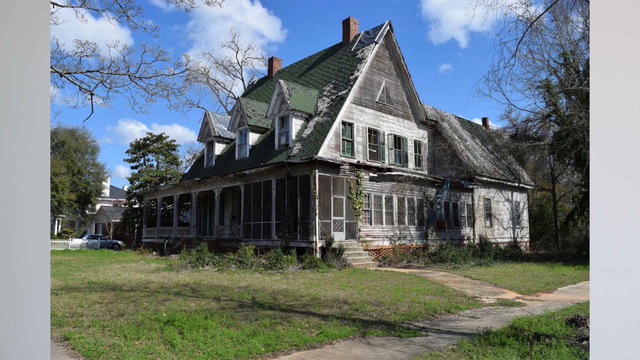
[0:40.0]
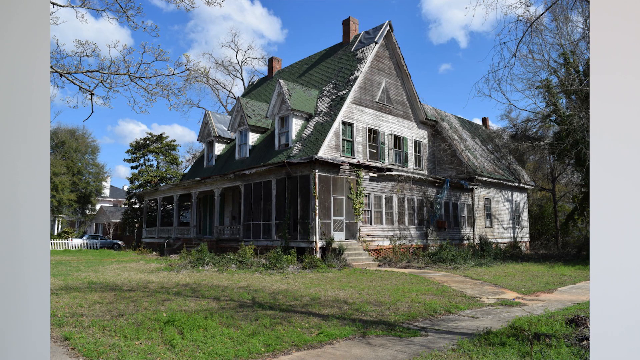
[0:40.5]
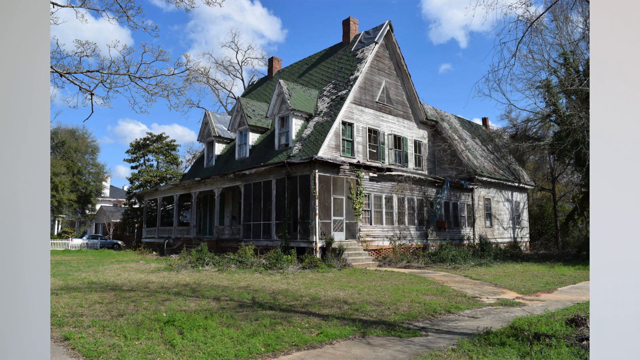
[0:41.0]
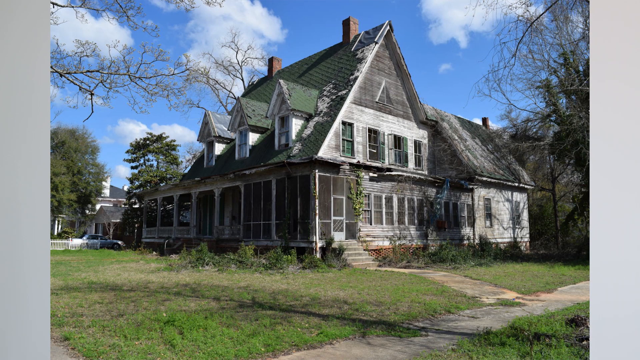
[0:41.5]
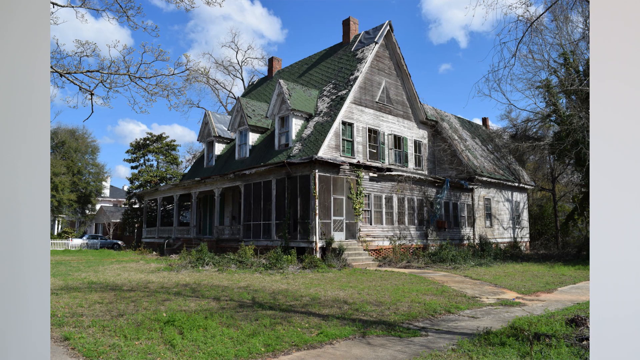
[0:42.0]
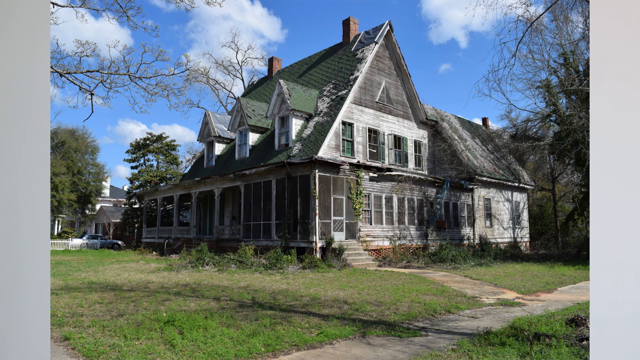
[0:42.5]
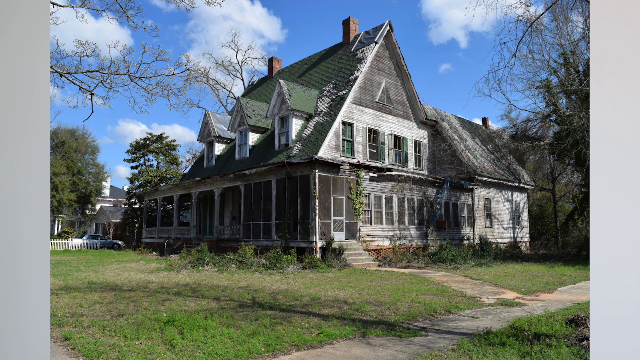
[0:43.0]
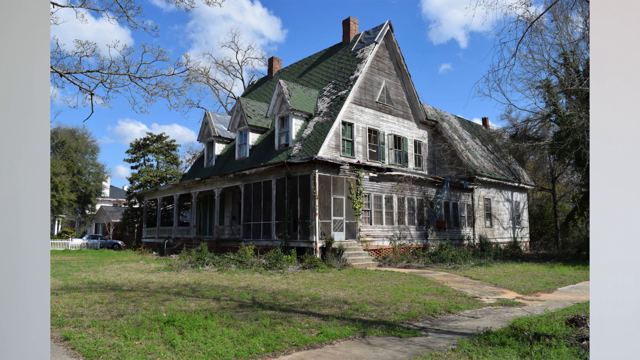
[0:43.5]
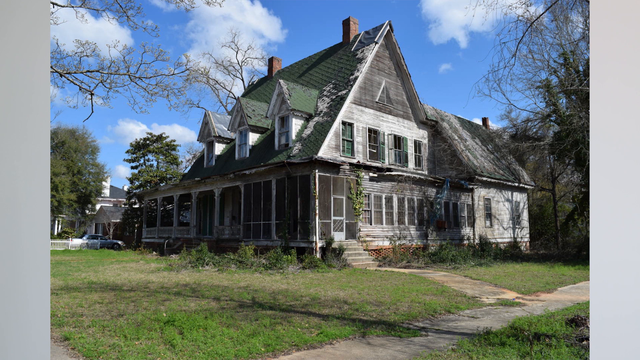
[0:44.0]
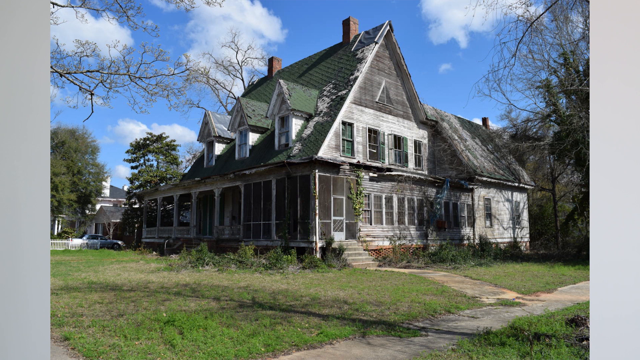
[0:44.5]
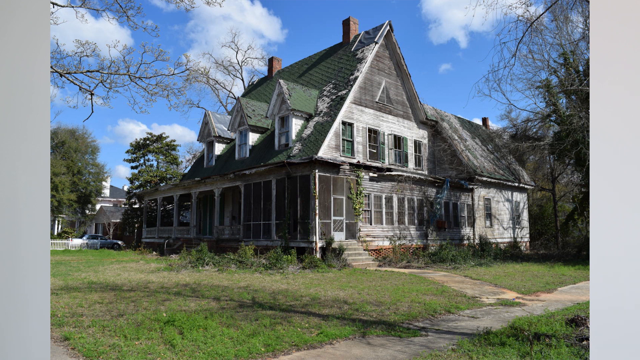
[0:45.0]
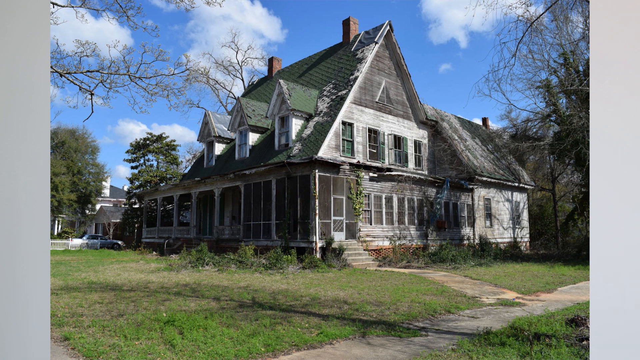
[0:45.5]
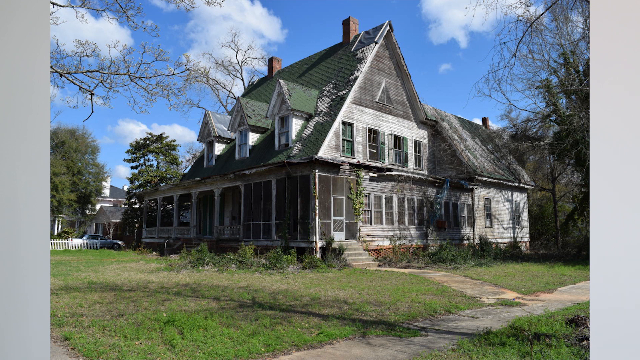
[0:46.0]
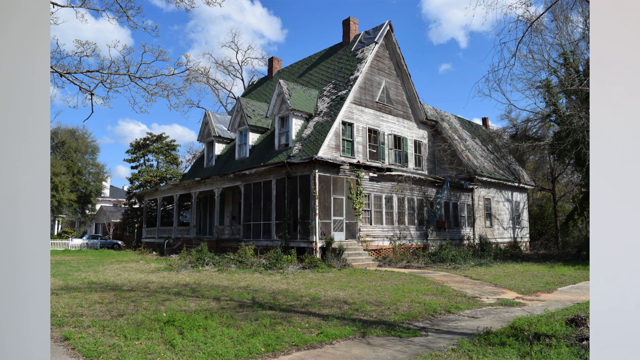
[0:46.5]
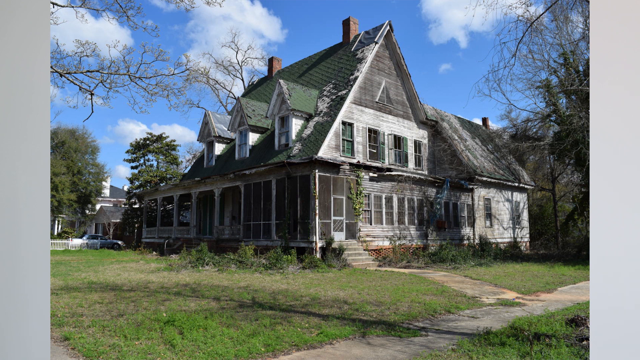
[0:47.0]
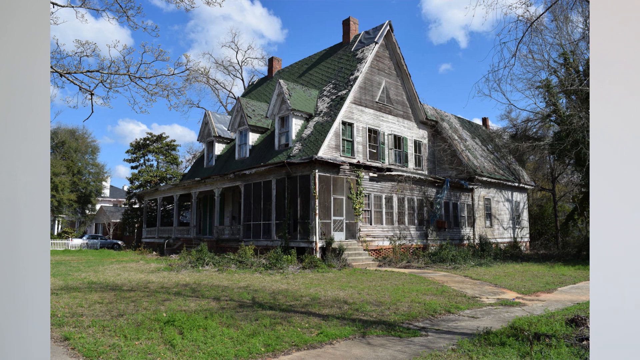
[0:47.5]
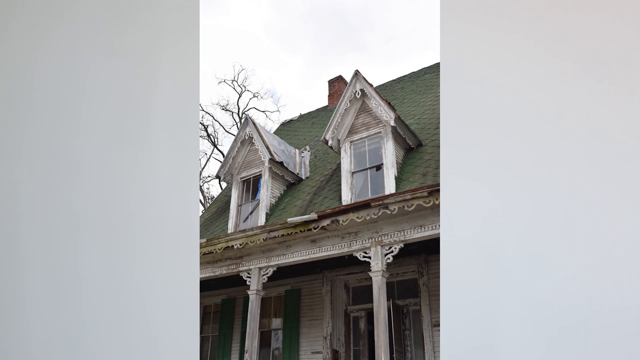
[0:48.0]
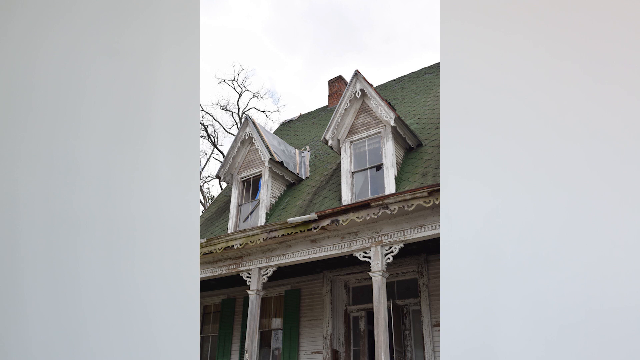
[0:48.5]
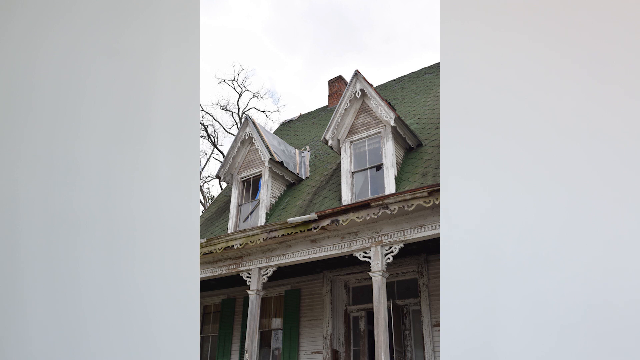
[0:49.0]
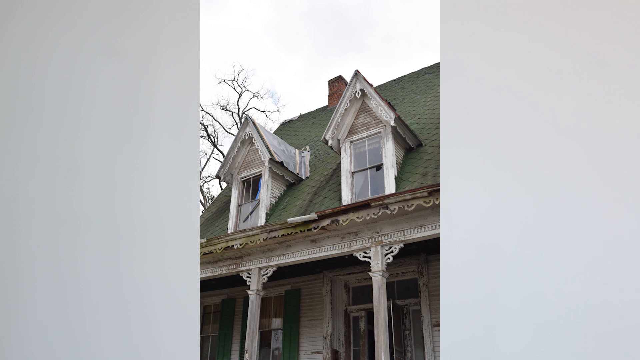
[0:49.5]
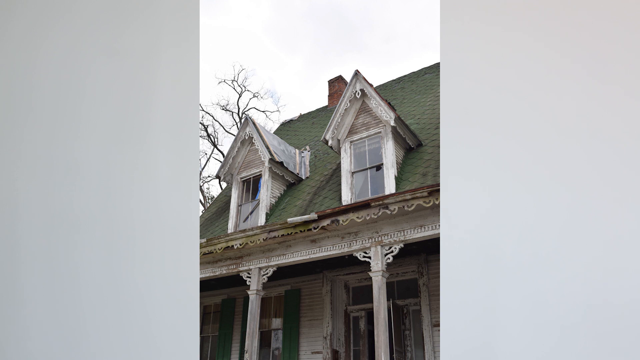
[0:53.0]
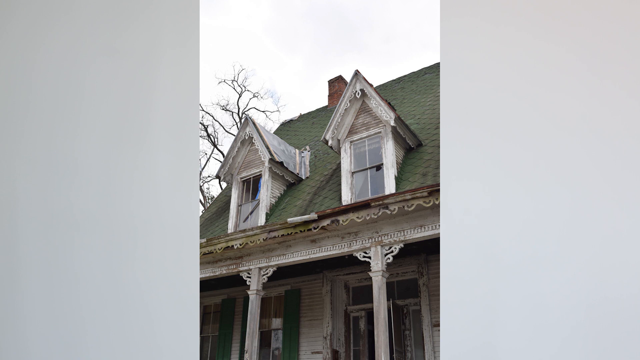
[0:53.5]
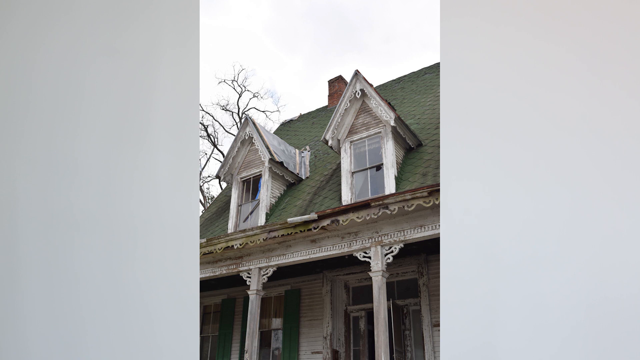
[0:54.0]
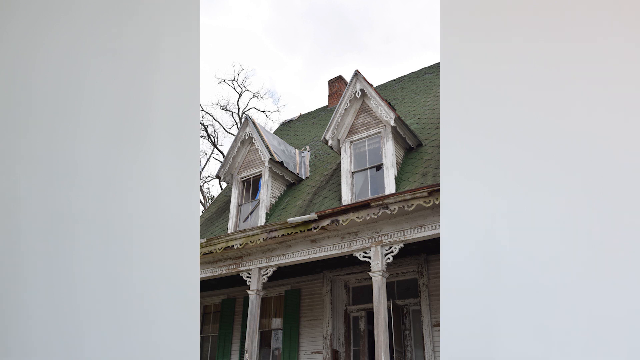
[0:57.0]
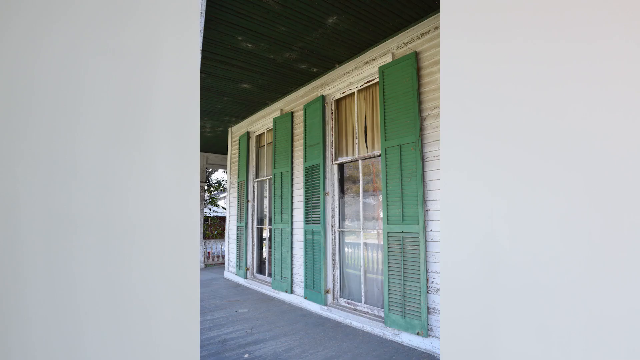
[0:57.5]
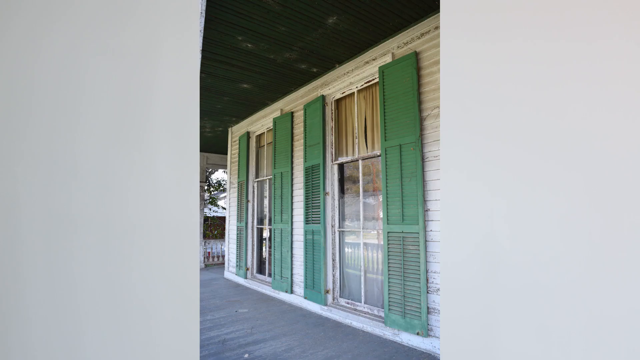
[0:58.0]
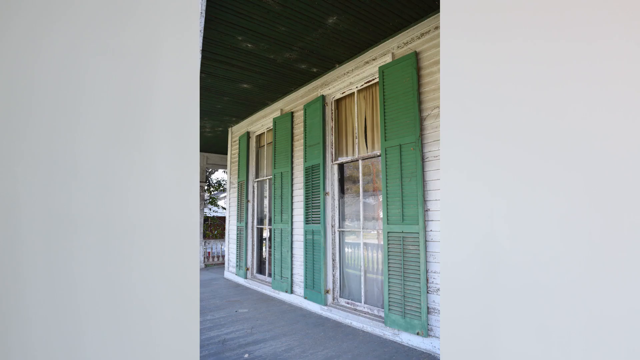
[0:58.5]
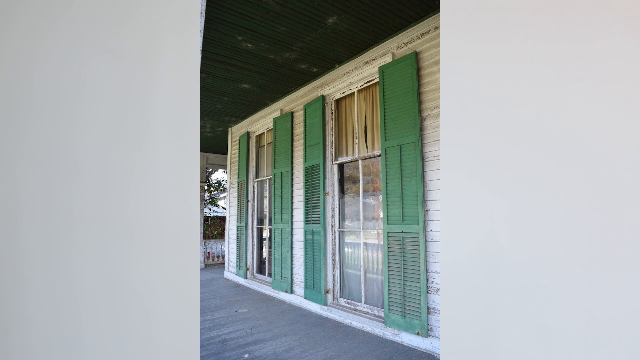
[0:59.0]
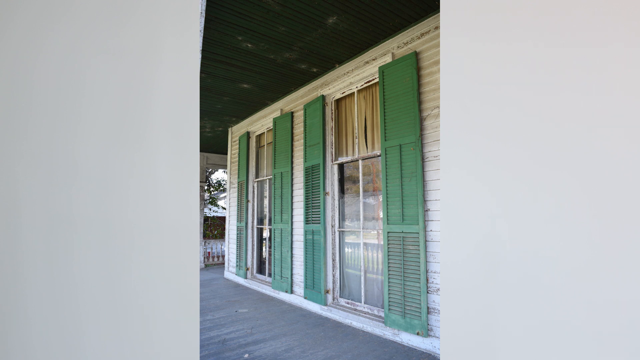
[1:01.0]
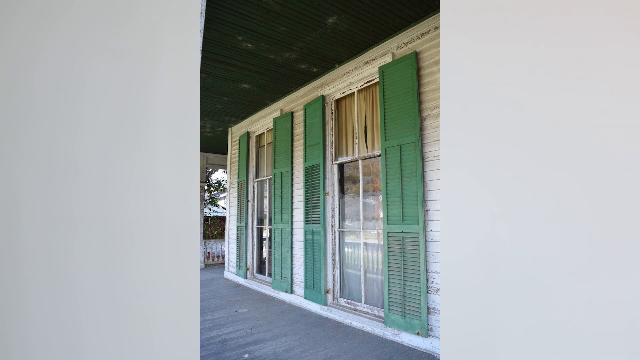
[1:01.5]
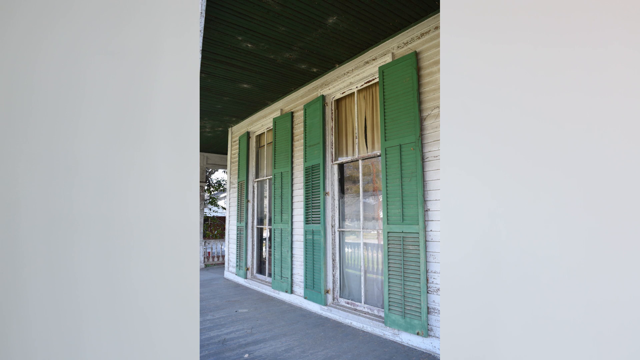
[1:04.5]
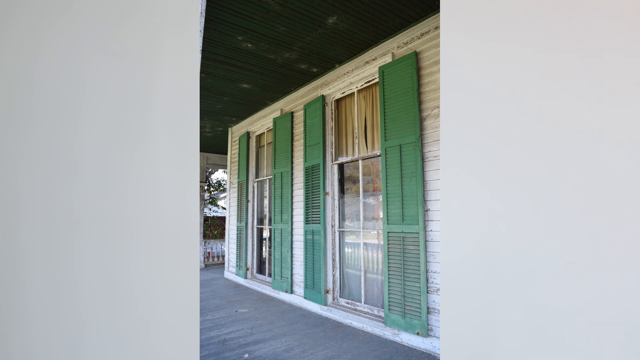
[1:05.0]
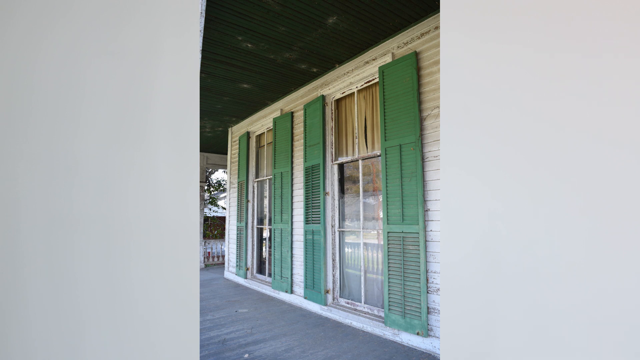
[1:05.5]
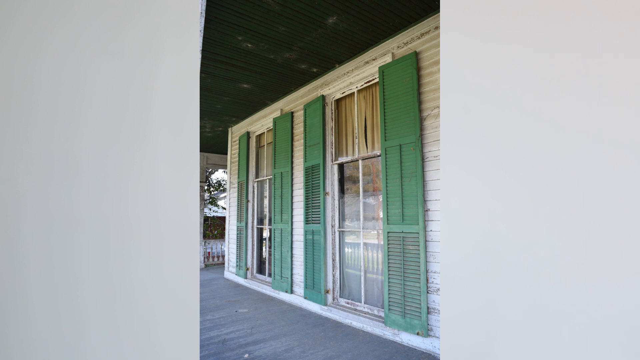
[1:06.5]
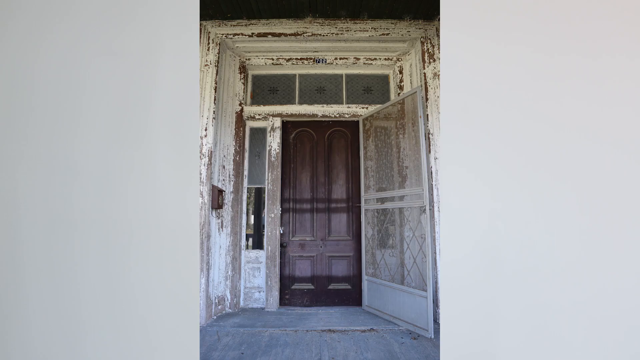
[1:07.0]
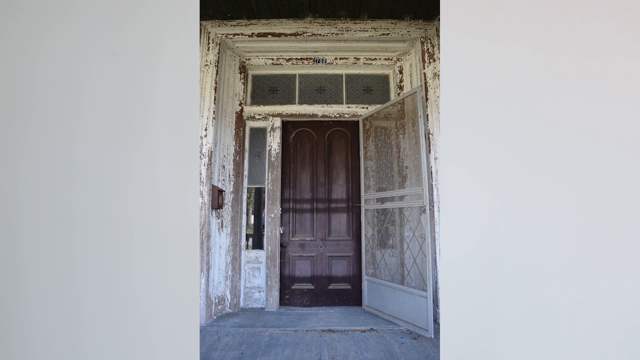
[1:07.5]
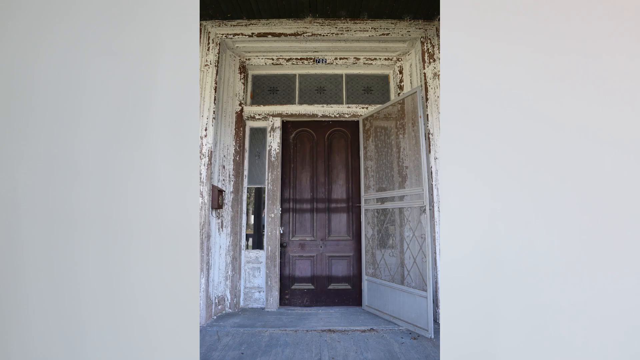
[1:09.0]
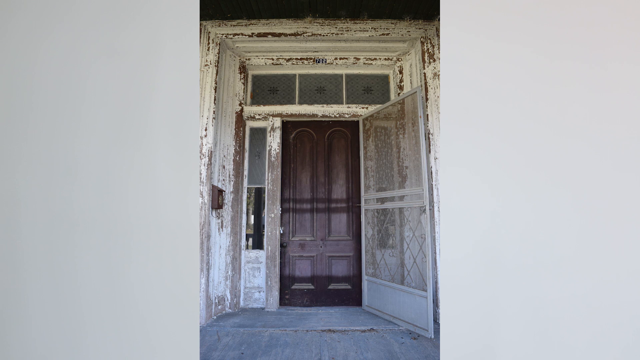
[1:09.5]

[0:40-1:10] A photo shows the side of a house with a large triangular black roof, much of its color fading away so that there are gray patches, as the house looks worn down. Along the roof on the front side are three large windows protruding from the roof, each with a small triangular roof above it. A very long porch spans the whole front of the house. The side of the house has two stories almost completely covered by windows, and the back part of the house has a lower roof and a few windows on its side. Next is a close-up of two of the windows on the roof. The roof is a blackish, almost greenish color, and the two windows protruding from it have tall glass with four rectangular panels, each topped by a small triangular roof. Beneath them, the gutter looks very worn down: white but very brown and gray, as if the paint has faded. Then comes a close-up of what look like windows on a side wall of the house, against white panels. There appear to be three tall, nearly floor-to-ceiling windows, each with two panels stacked on top of each other and long green wooden shutters open on both sides. Finally, an image shows what looks like the front door, a large, tall, brown wooden door that looks to be in pretty good shape. The screen door is open and there are three windows above the door. Much of the paint on the white wood framing around the door appears chipped away, showing a lot of brown underneath, and it looks very old and worn down.